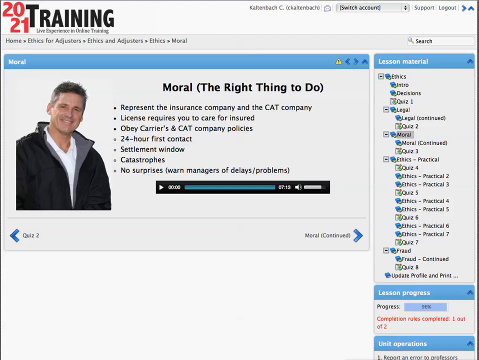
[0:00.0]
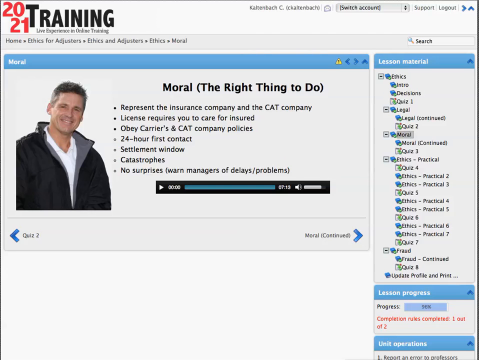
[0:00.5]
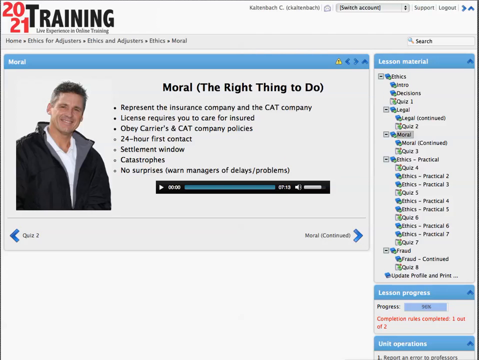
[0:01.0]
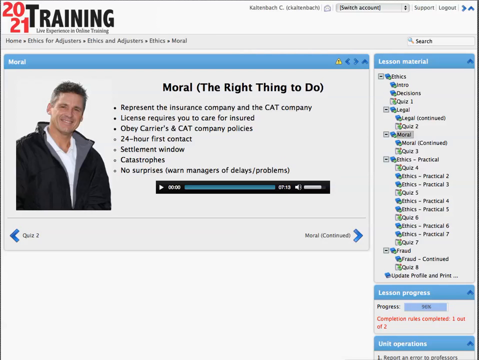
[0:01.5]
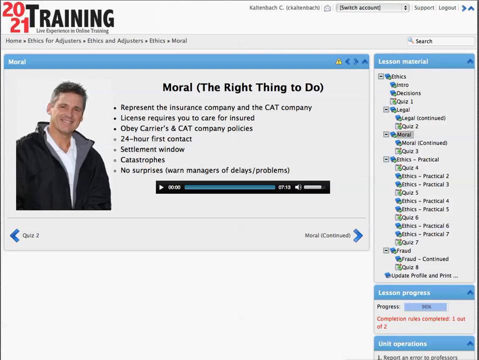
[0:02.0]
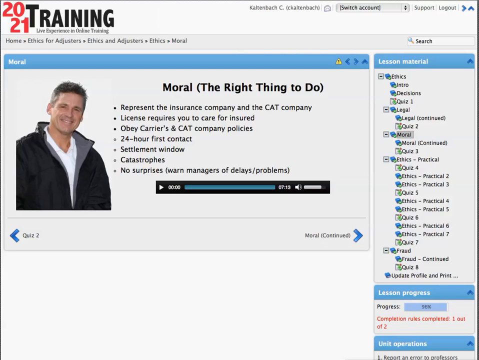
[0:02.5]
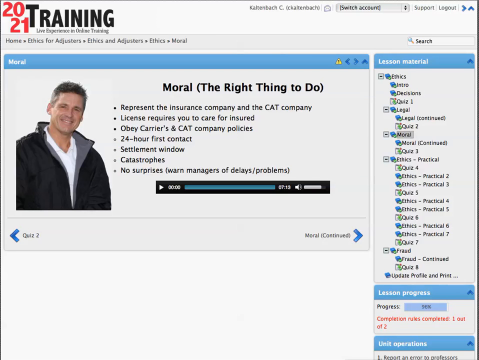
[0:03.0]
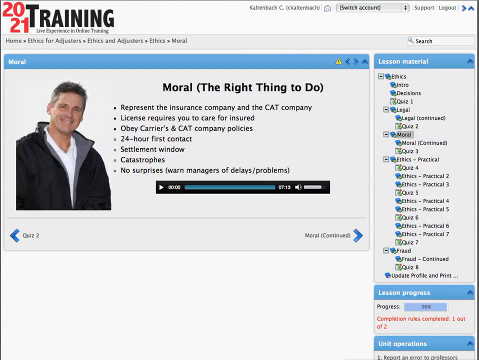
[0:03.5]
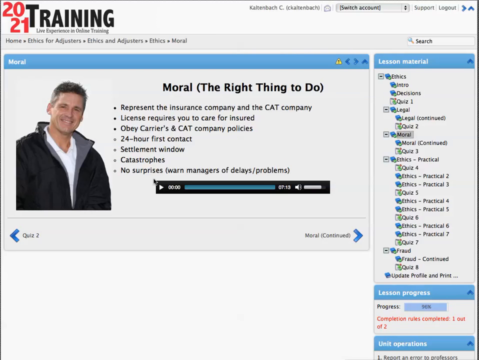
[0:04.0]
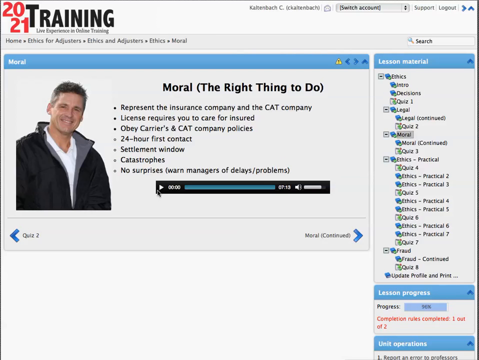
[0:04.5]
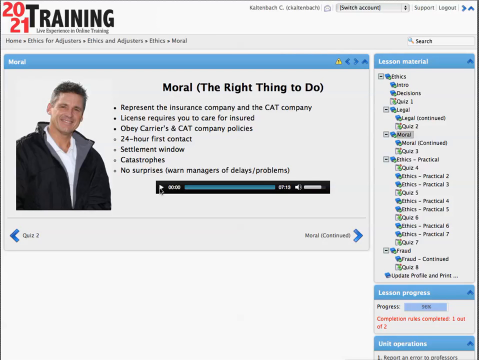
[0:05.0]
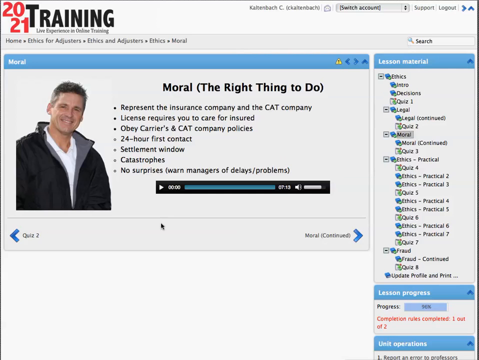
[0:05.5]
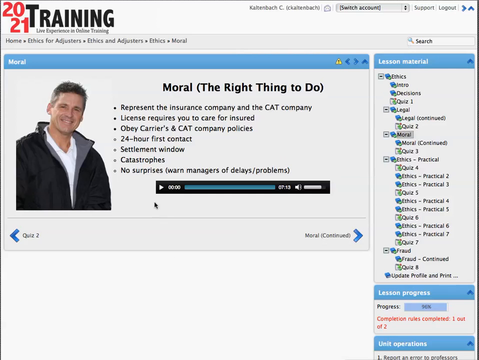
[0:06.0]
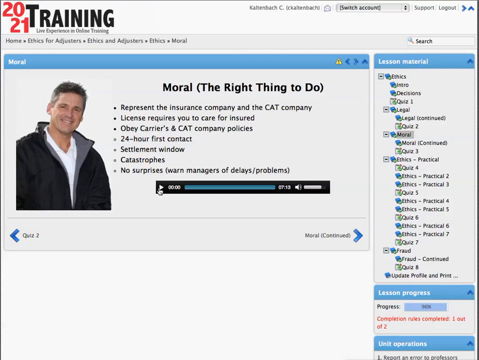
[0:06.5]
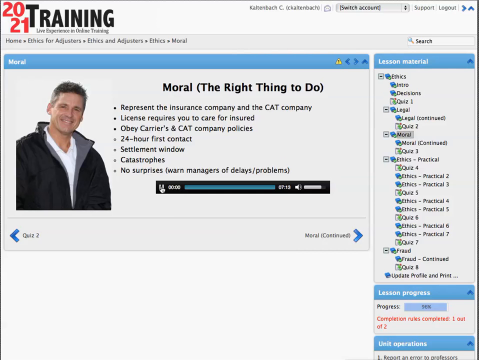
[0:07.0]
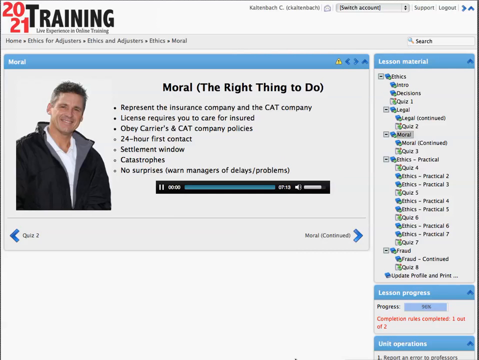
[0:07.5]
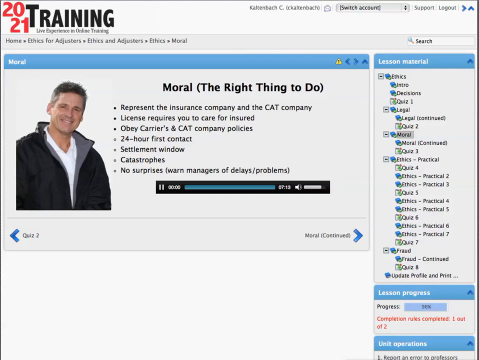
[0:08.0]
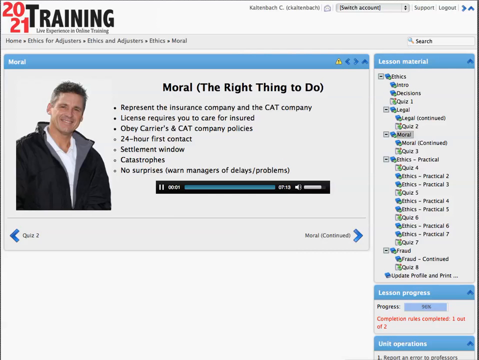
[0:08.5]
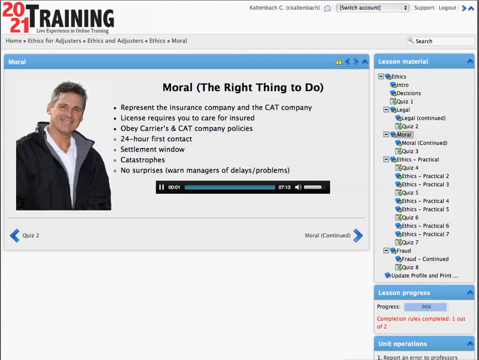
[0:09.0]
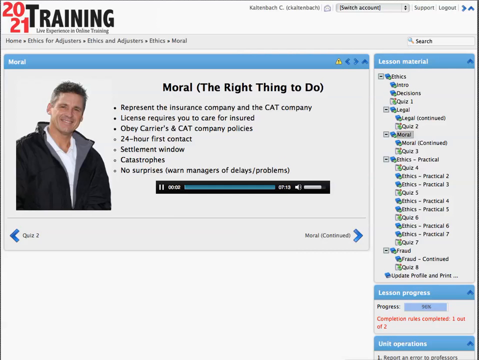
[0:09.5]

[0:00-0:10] The video appears to be a training from 2021. It shows a screen that looks like a screen on a monitor, apparently displaying slides. On the right-hand side there is a list of lesson material, and at the bottom the lesson progress is shown. A picture of a man appears; he wears a black jacket and a white t-shirt, looks to be in his late 40s, and is smiling. The slide is titled "moral" followed by "(the right thing to do)". There is a recording on the screen, and the cursor moves and plays it.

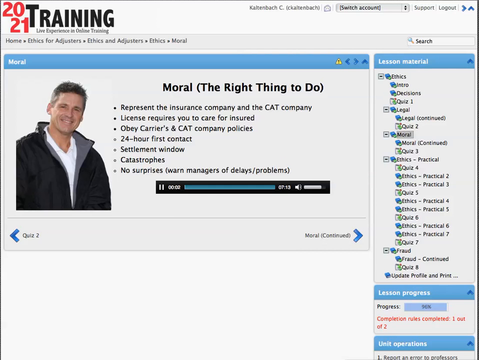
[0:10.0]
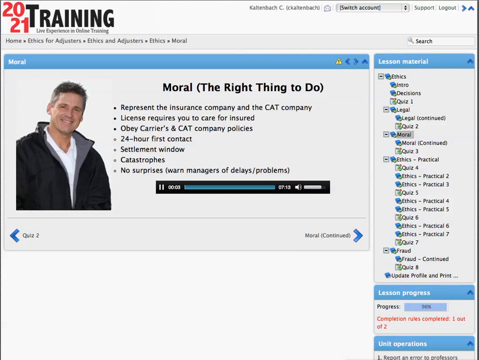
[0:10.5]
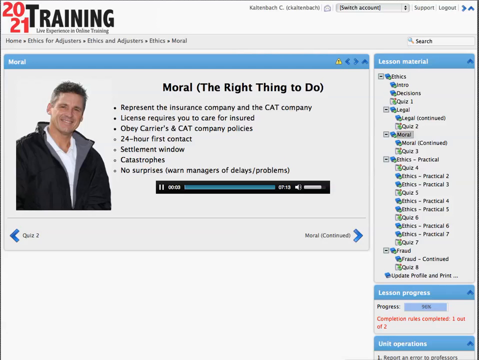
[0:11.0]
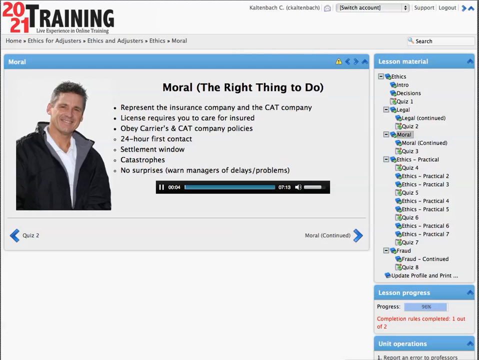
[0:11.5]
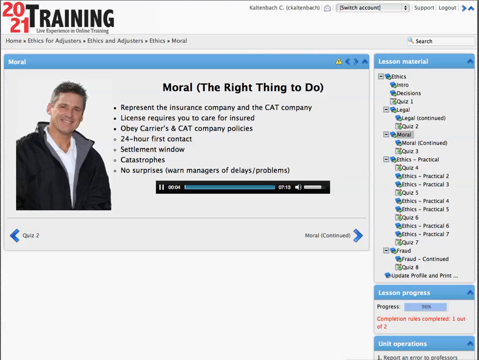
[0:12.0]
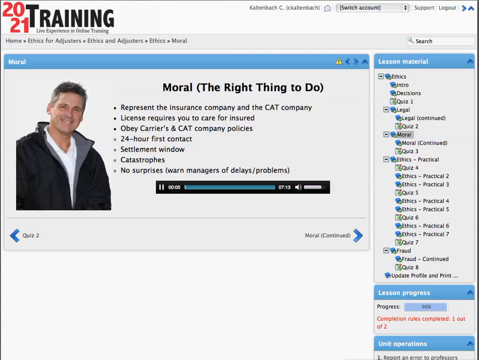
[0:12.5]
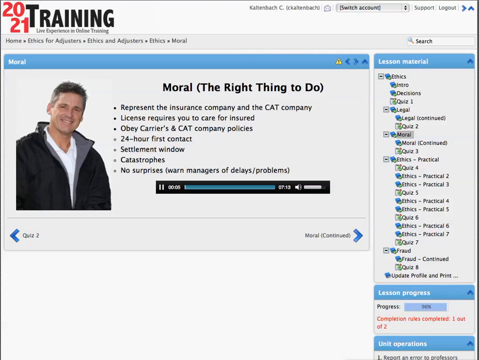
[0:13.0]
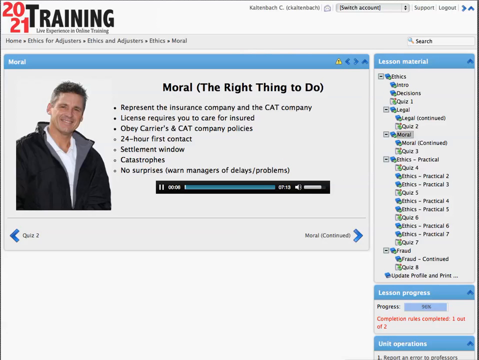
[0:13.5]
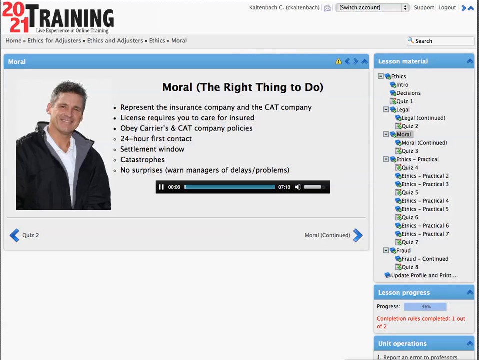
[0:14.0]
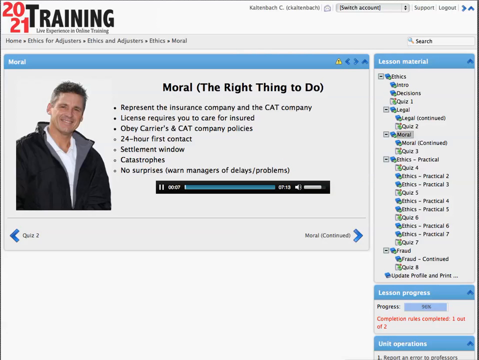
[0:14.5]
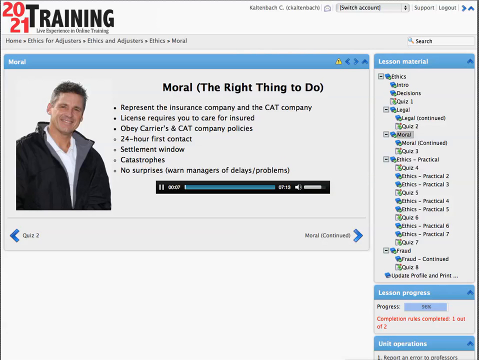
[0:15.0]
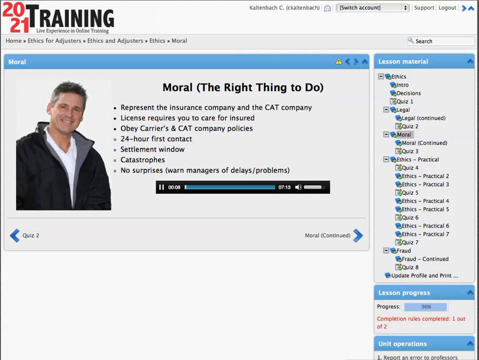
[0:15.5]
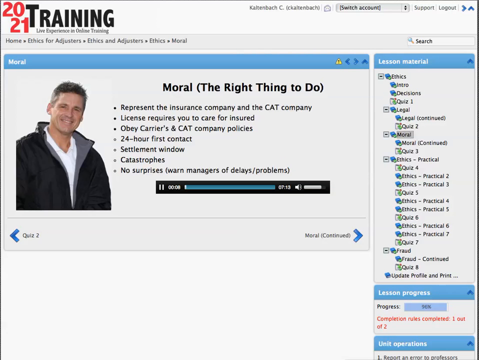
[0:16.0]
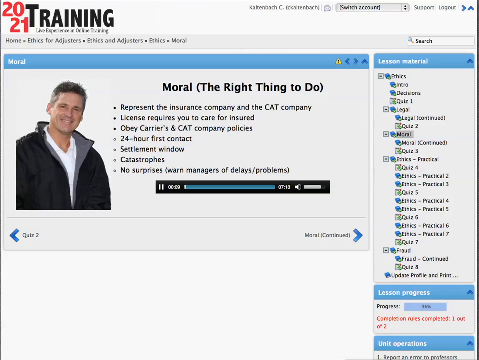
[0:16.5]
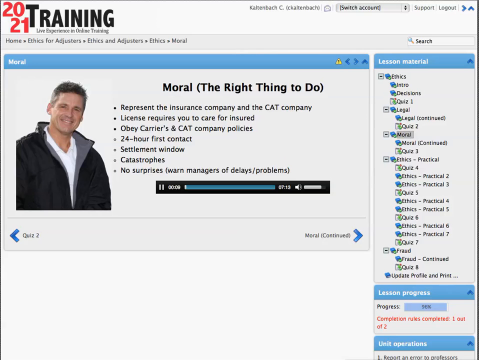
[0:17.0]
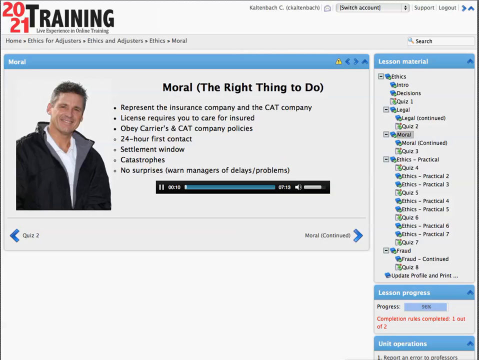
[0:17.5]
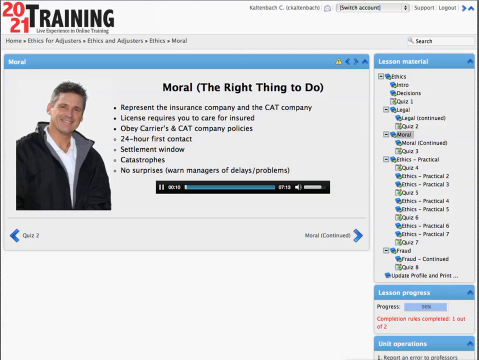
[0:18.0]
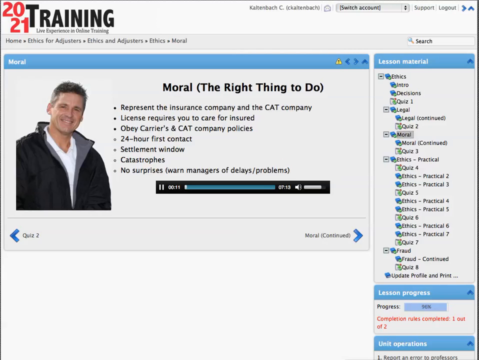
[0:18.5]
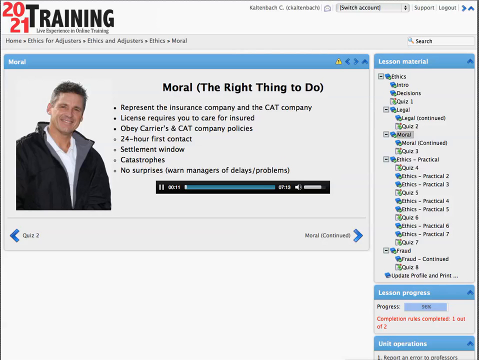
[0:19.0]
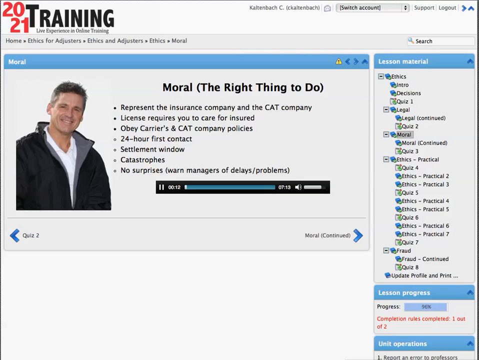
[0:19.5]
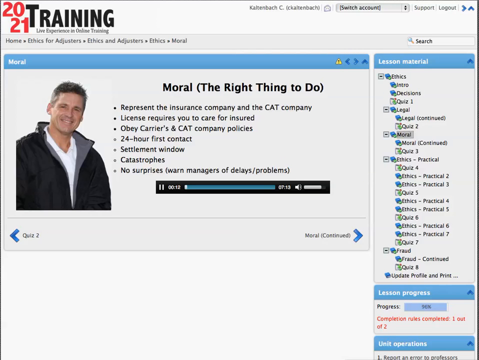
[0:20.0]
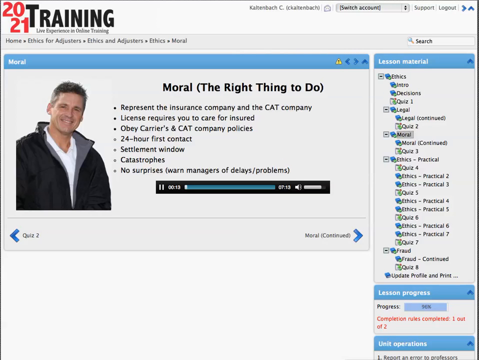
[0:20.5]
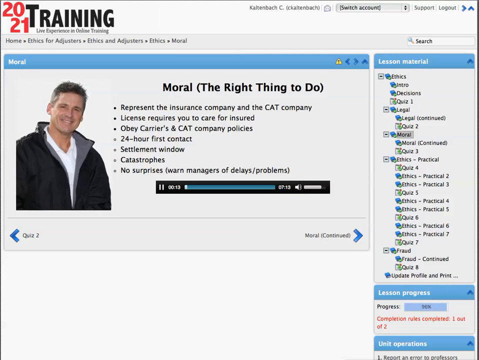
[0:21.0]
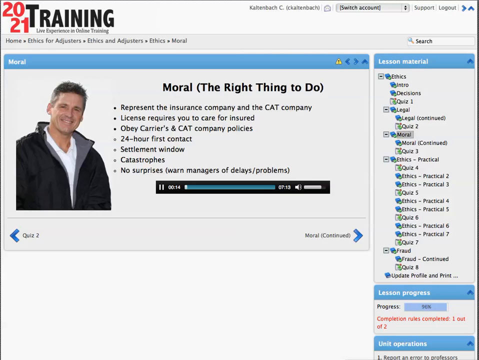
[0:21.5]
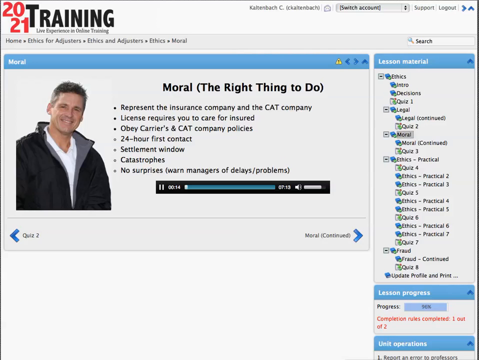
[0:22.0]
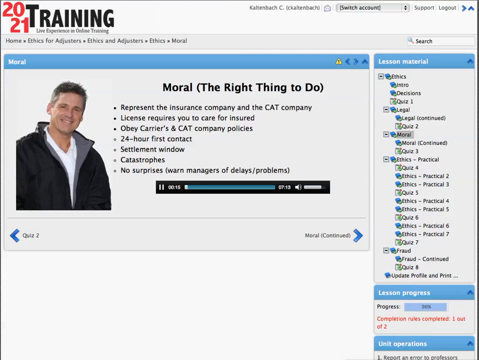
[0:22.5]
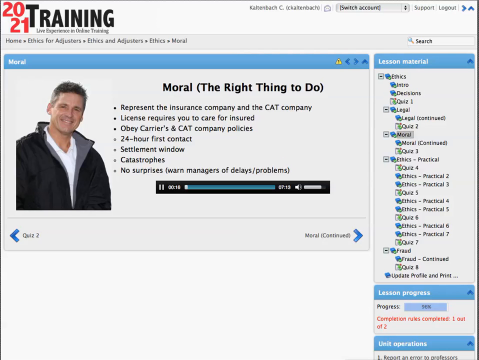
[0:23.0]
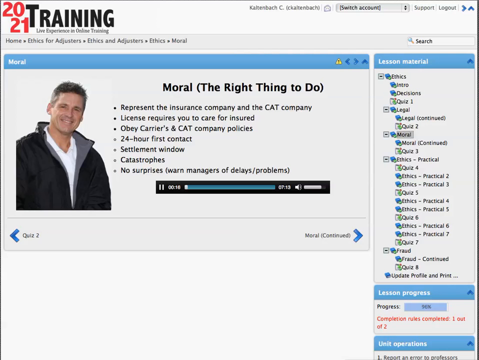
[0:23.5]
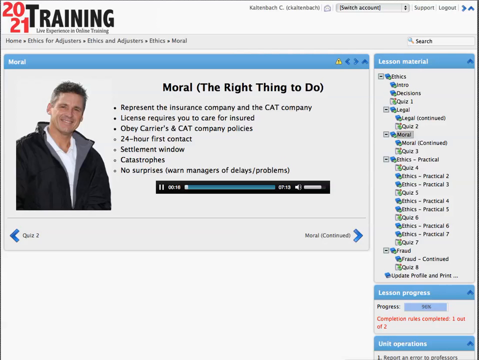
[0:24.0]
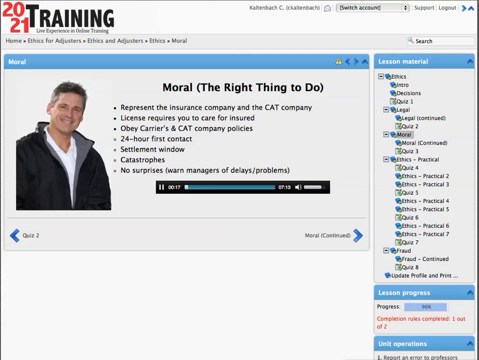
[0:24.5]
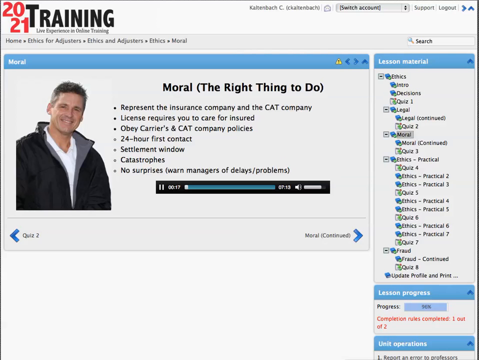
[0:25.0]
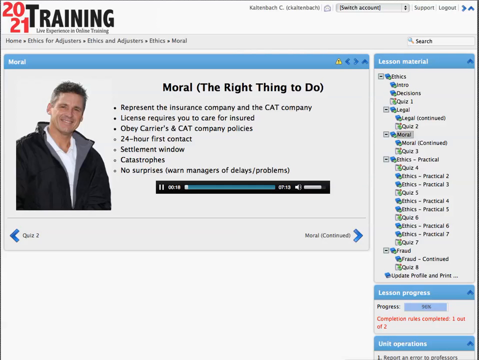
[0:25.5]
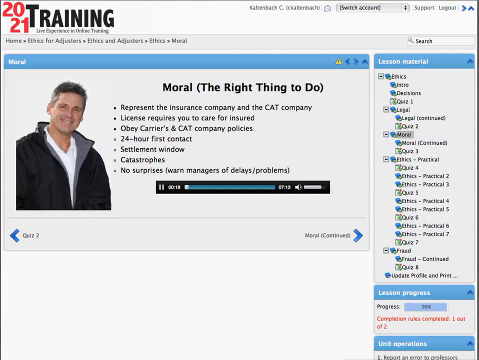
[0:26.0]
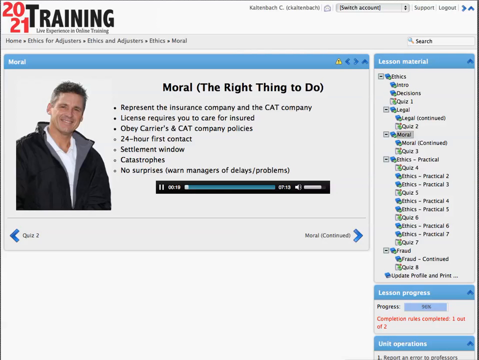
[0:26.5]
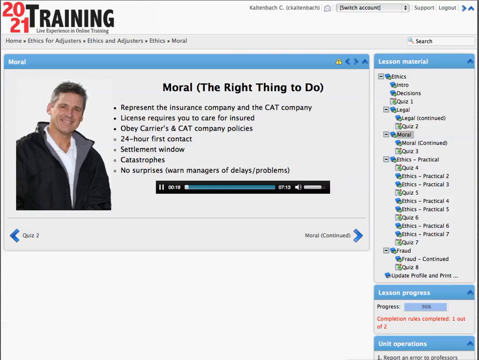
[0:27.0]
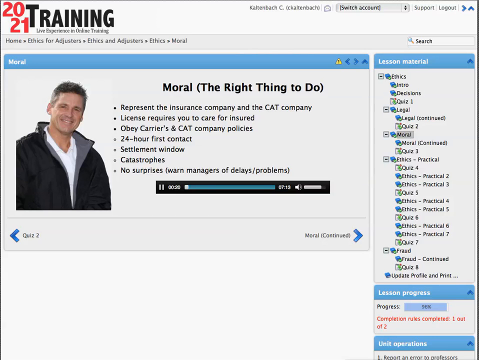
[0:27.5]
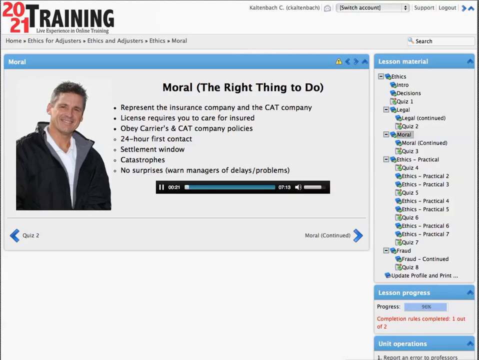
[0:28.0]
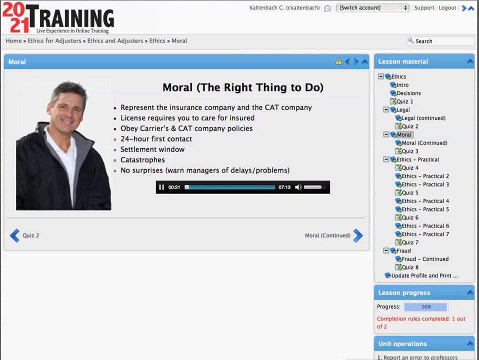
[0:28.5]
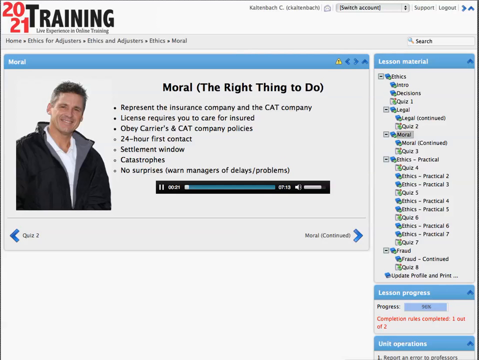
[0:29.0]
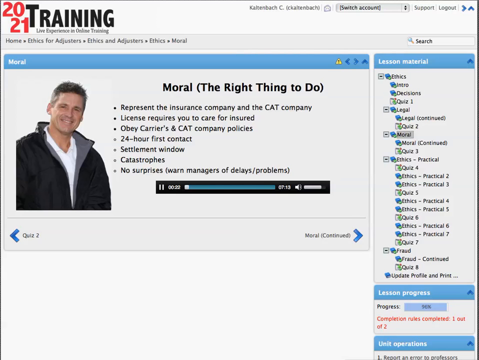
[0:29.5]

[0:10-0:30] The screen still shows the title "moral (the right thing to do)". The cursor moves and clicks the play button; the audio is 7 minutes and 13 seconds long. The cursor keeps moving on the screen. On the left side there is an arrow labeled "quiz 2", and on the right-hand side there is an arrow labeled "moral Continued". The lesson has a list of bullet points: "represent the insurance company and the CAT company", "license requires you to care for insured", "obey careers and CAT company policies", "24-hour first contact", "settlement window", "catastrophes", and finally "no surprises" followed by bracketed text mentioning delays or problems.